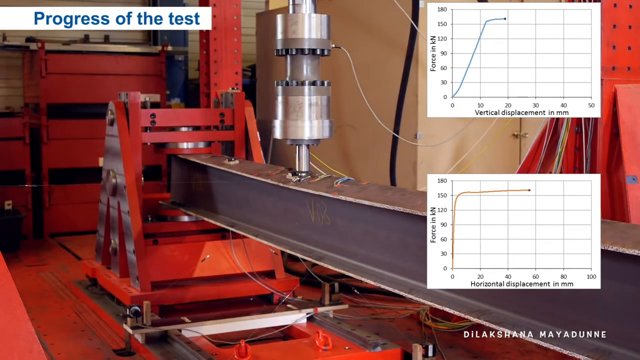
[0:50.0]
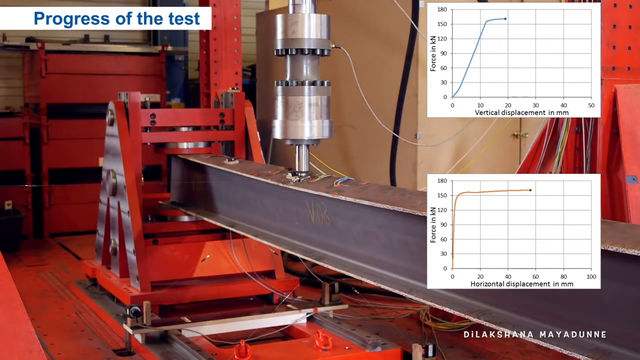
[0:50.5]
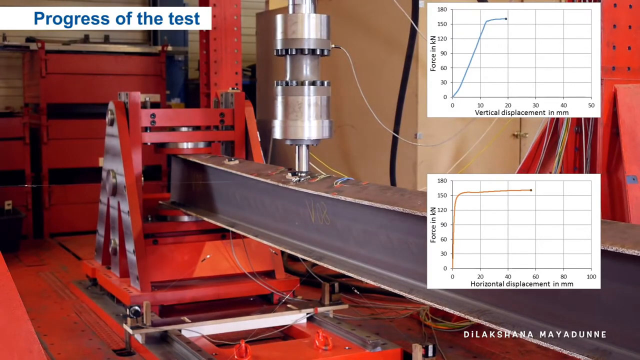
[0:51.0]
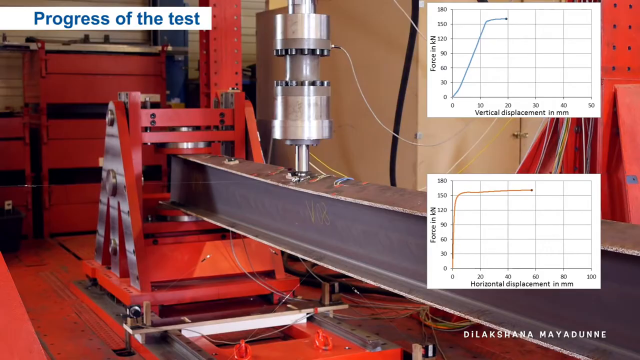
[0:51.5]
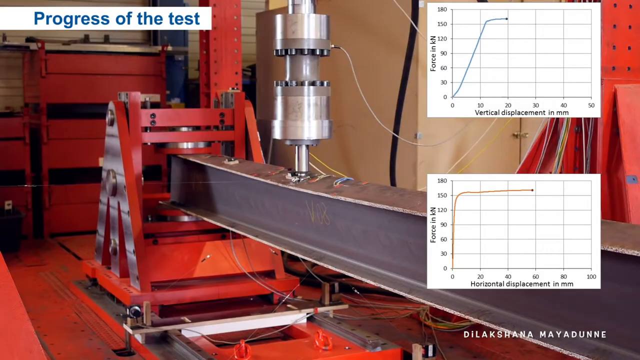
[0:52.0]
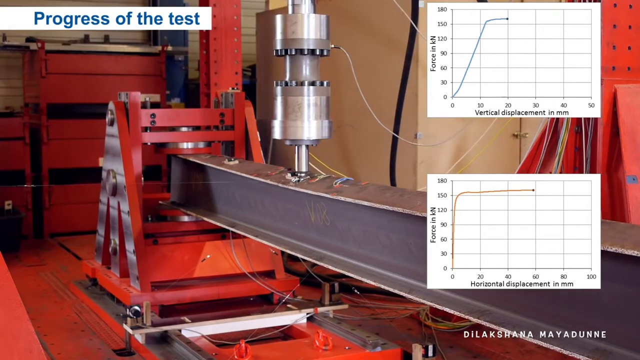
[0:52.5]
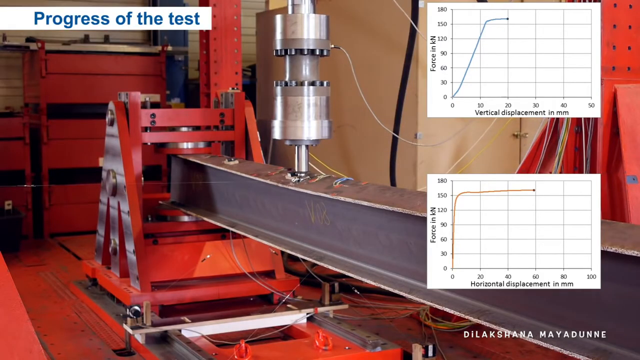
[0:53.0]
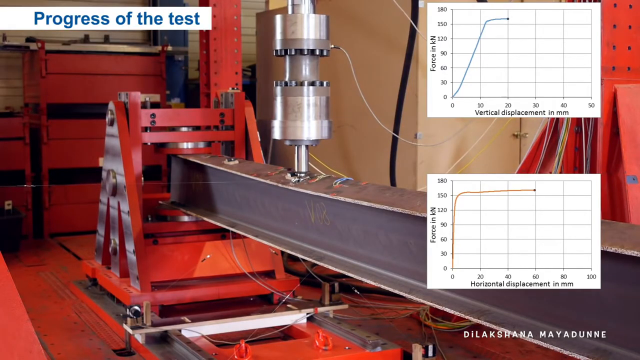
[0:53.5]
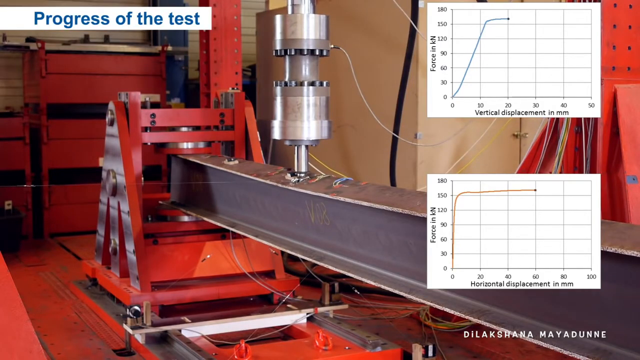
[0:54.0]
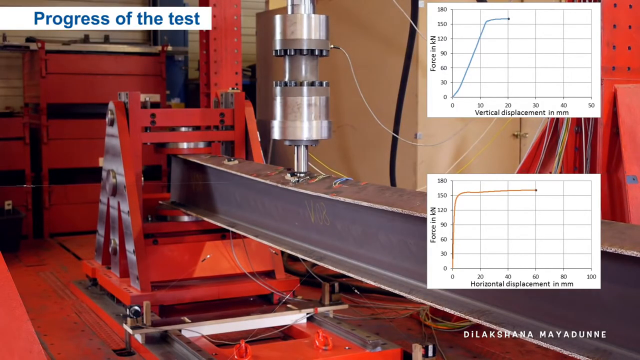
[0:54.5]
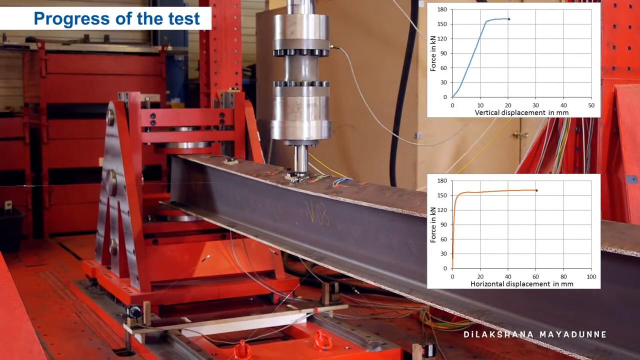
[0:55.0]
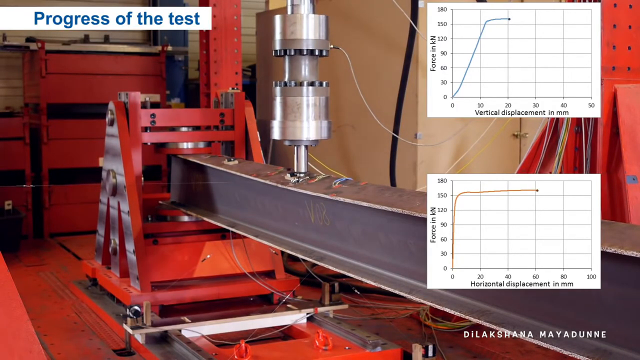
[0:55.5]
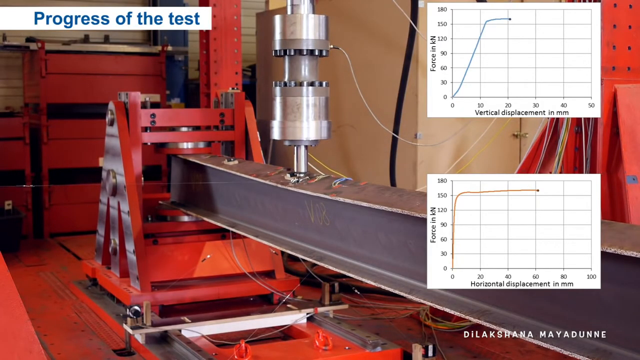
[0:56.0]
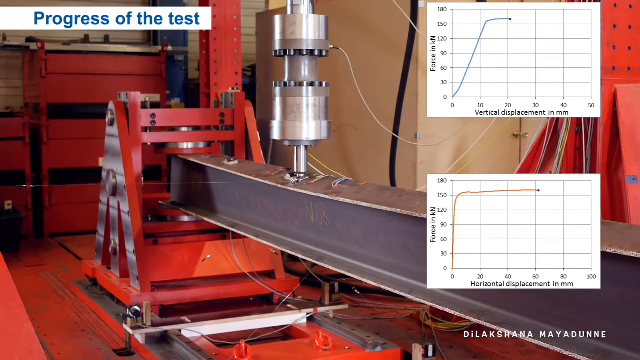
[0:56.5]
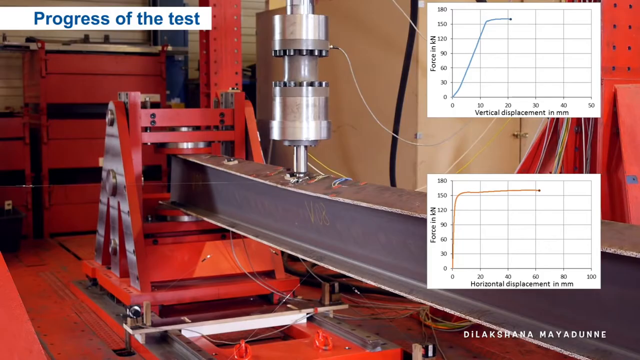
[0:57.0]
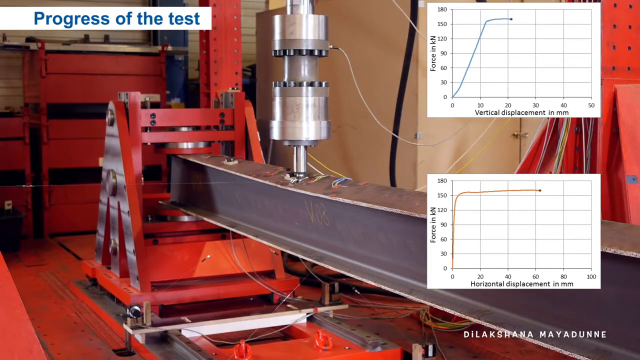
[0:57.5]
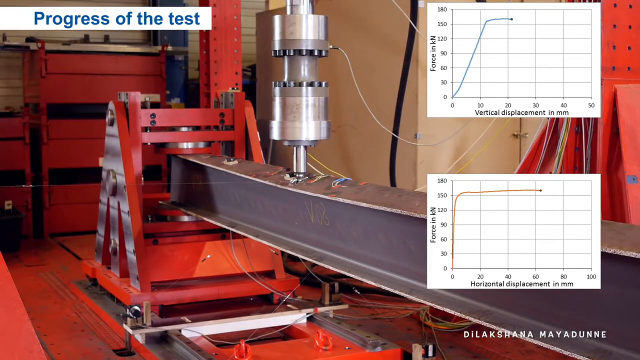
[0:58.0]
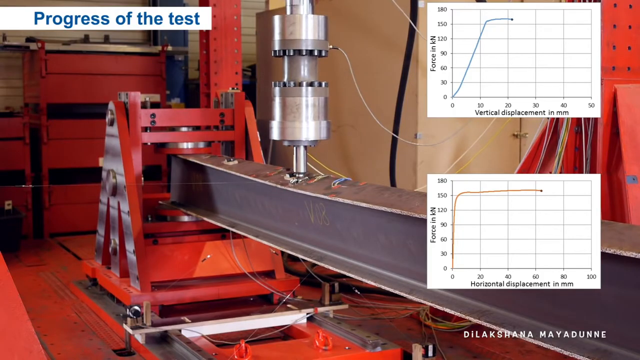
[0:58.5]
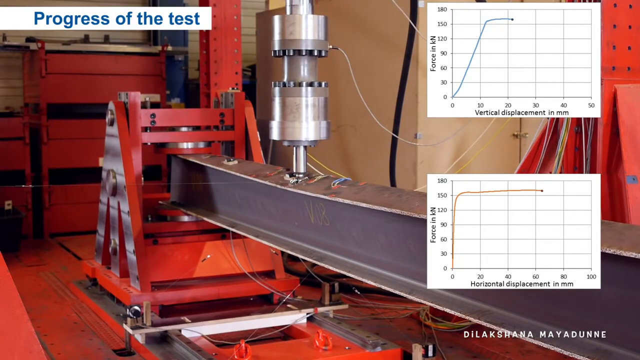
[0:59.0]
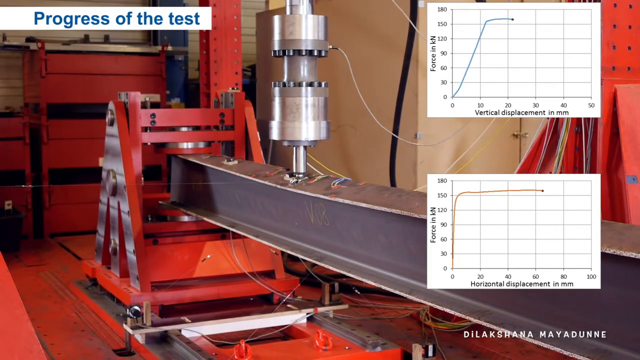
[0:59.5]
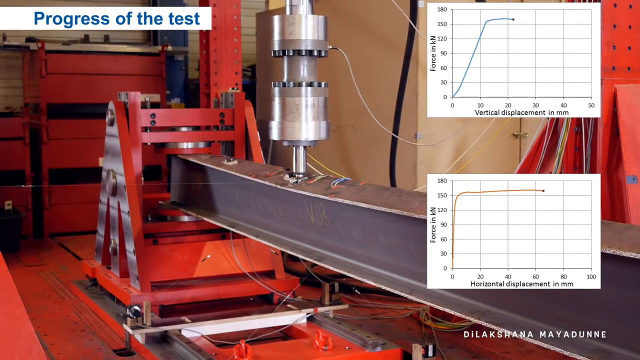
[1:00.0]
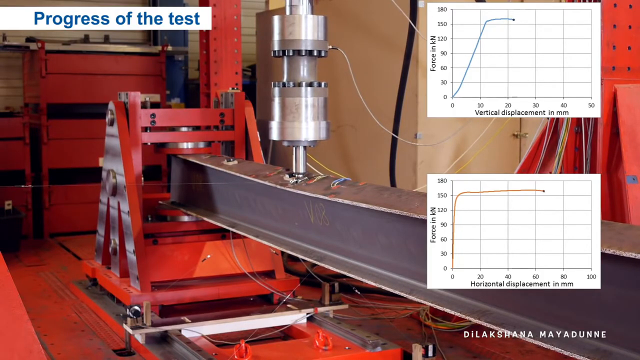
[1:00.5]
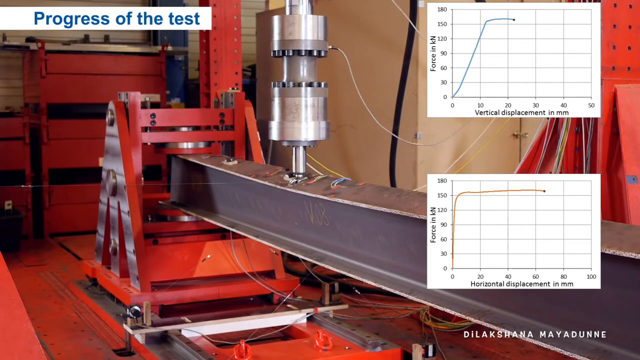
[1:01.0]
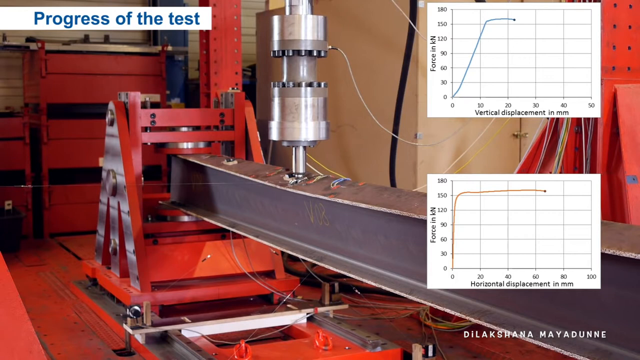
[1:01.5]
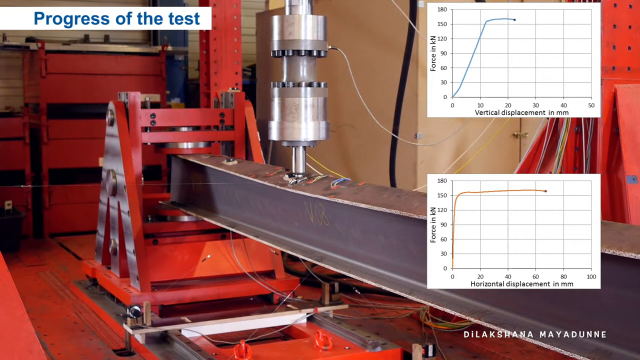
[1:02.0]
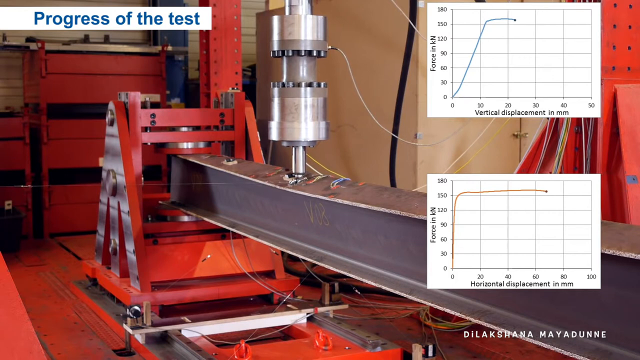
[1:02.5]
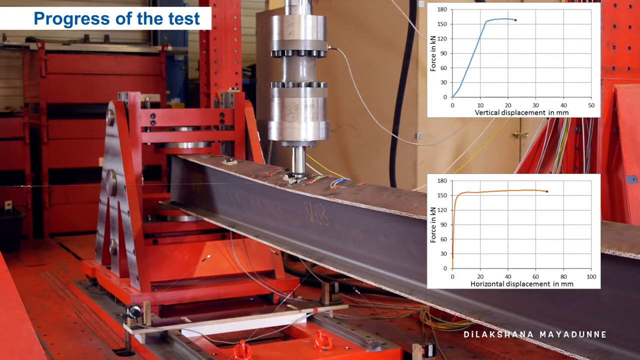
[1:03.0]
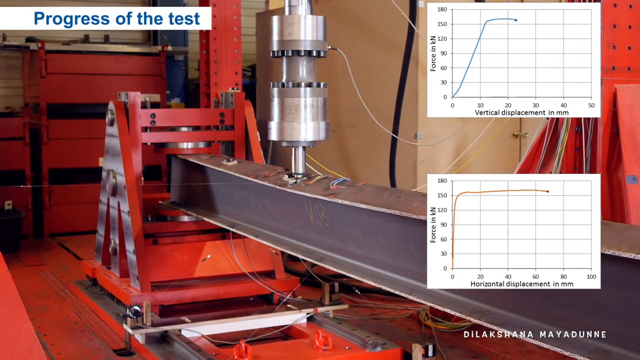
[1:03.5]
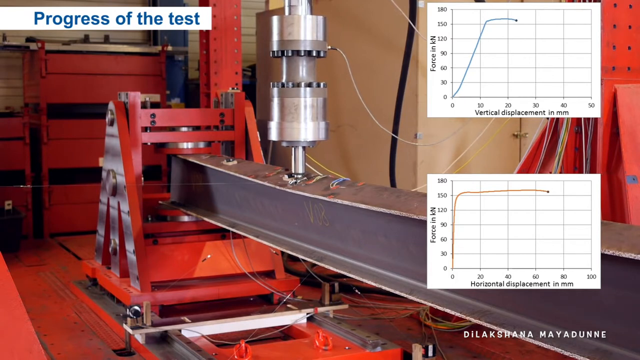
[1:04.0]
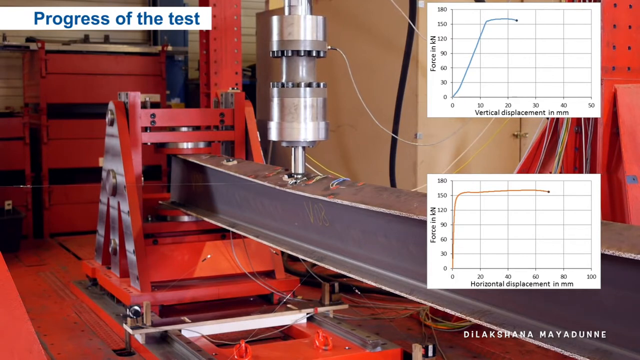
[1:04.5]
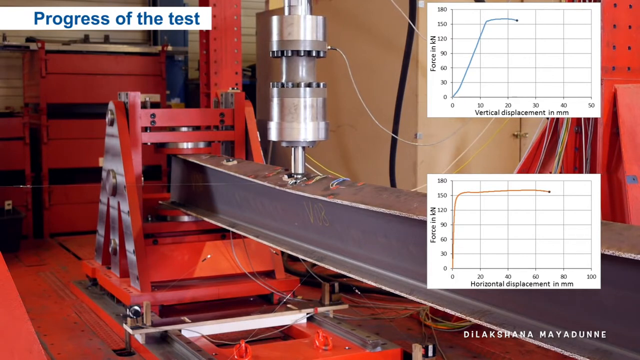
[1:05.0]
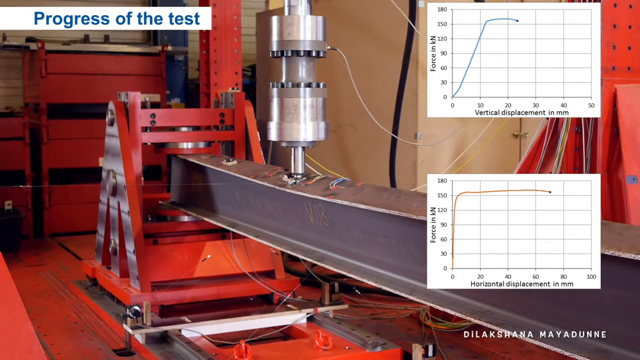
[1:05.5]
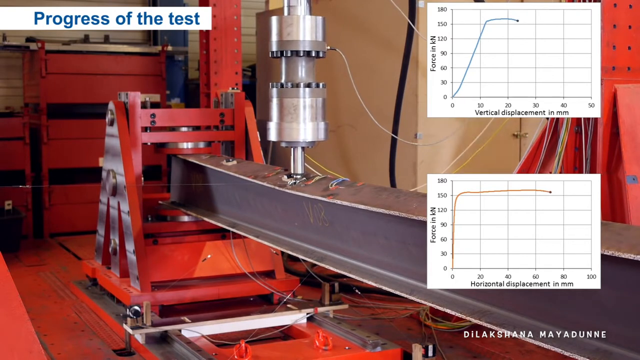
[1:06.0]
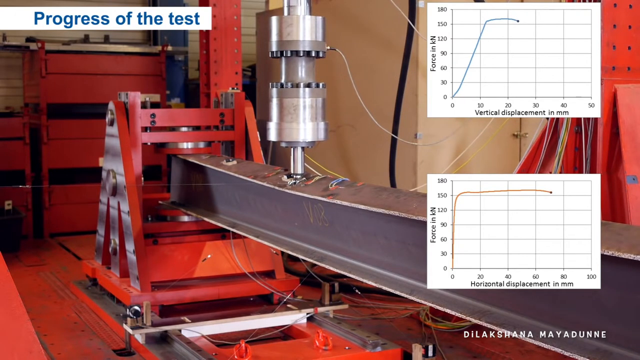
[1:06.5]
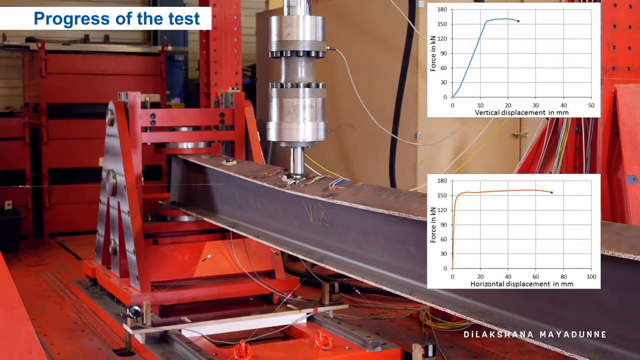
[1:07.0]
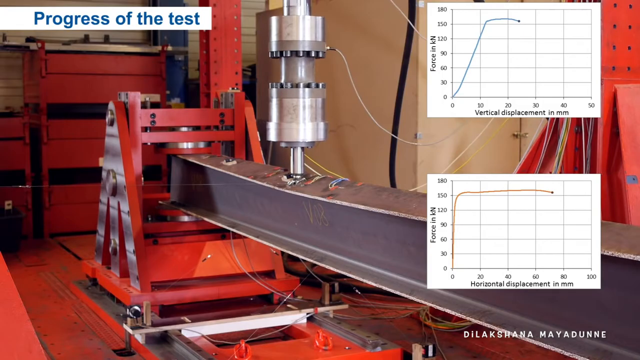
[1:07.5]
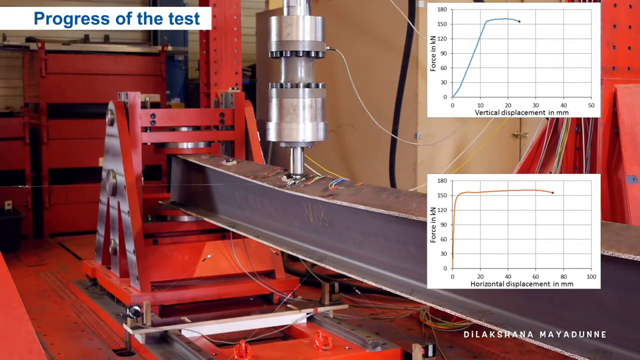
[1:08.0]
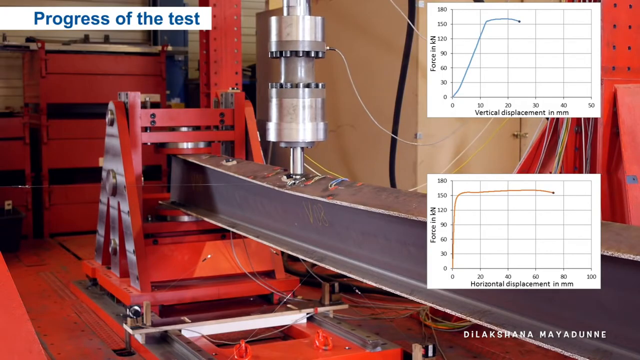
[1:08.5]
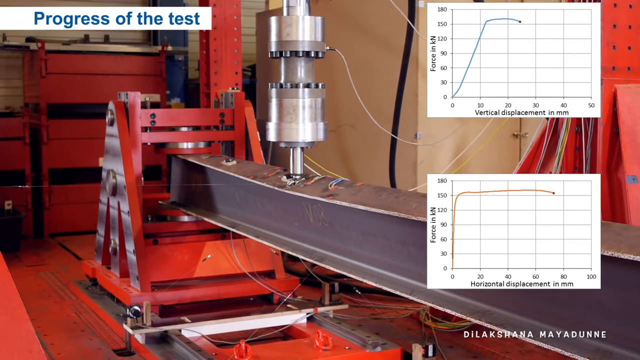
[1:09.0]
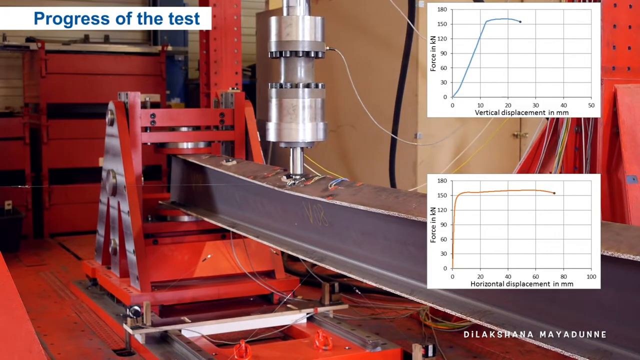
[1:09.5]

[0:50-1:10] The machine has a cylindrical object in the upper central portion of the screen and a strip across the middle section. The cylindrical object is drilling a hole into the strip. Various other objects of random colors are scattered in different locations throughout the scene, in a room with a white background and some shadows. Two graphs on the right side of the screen show force in kilonewtons on the y-axis and vertical displacement in millimeters on the x-axis, plotting force over displacement.